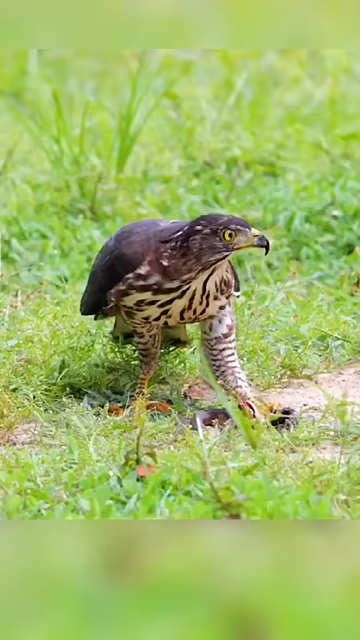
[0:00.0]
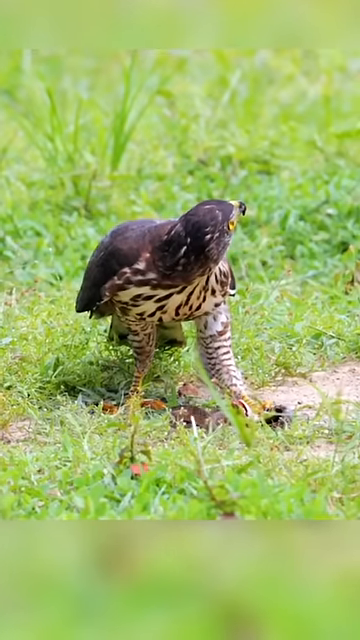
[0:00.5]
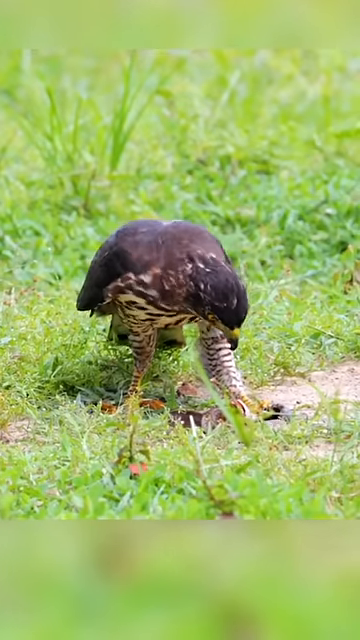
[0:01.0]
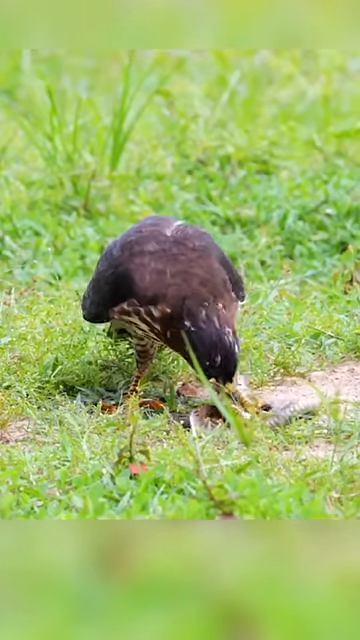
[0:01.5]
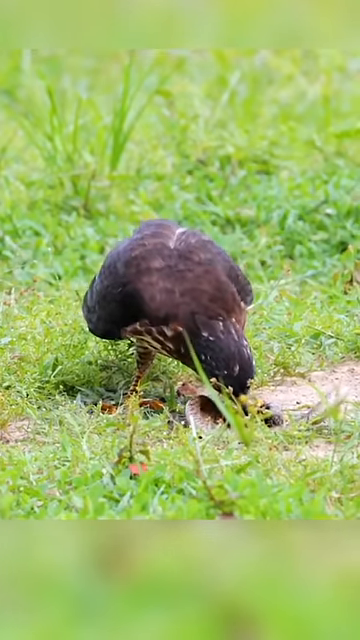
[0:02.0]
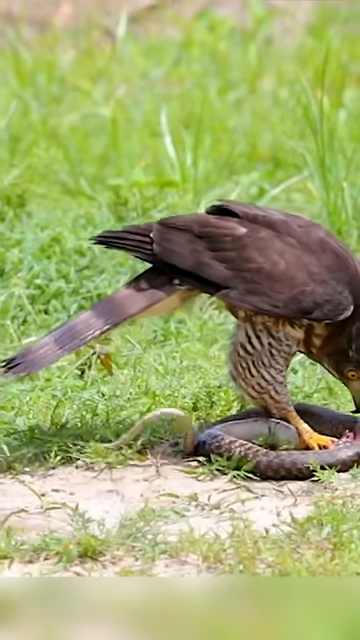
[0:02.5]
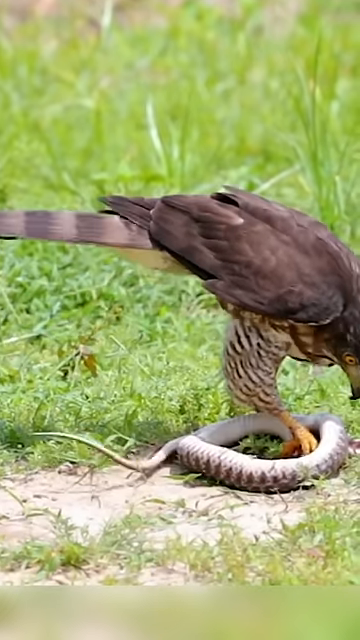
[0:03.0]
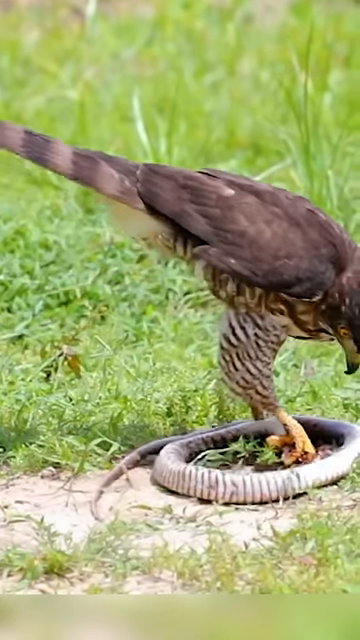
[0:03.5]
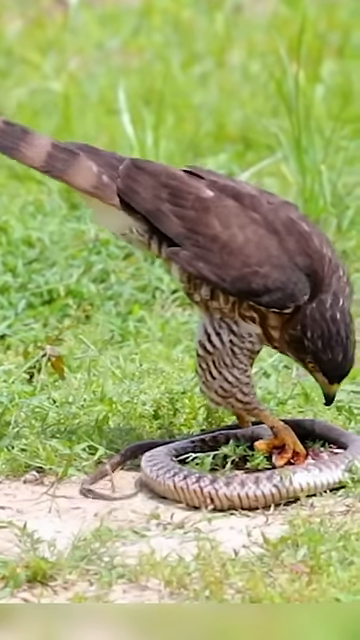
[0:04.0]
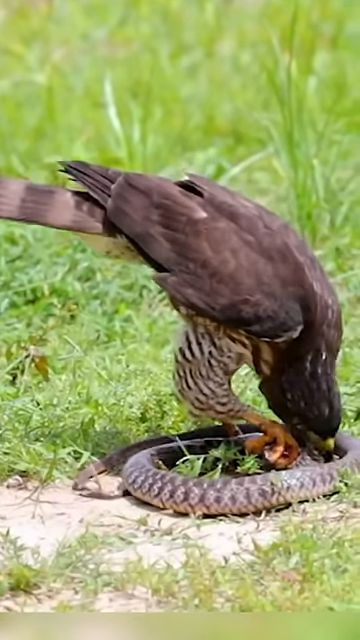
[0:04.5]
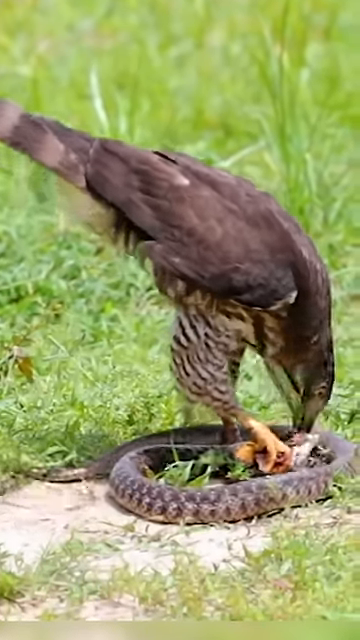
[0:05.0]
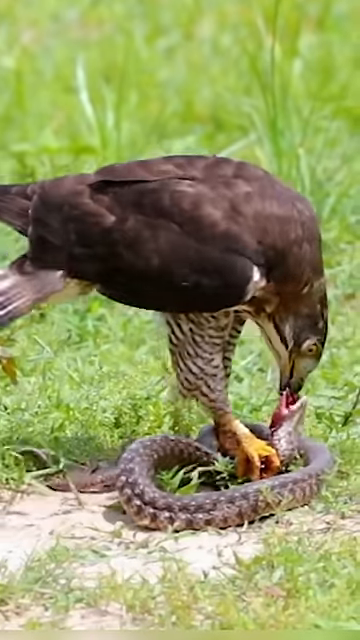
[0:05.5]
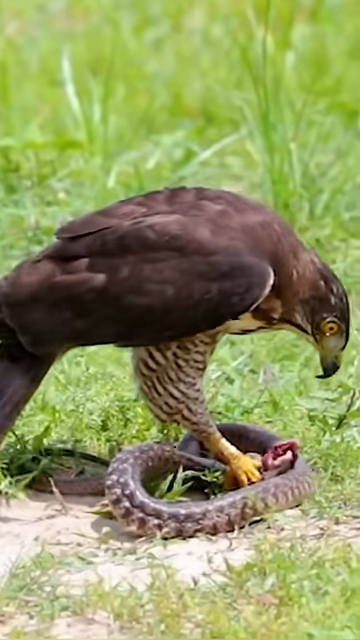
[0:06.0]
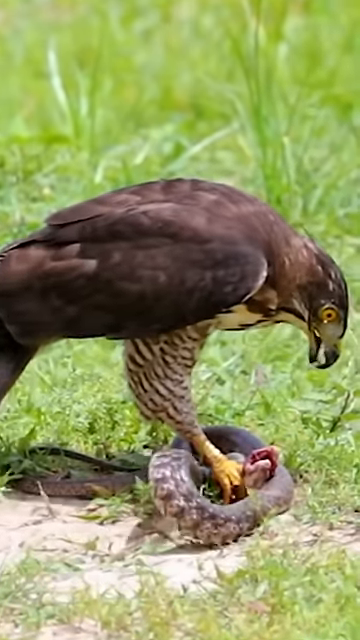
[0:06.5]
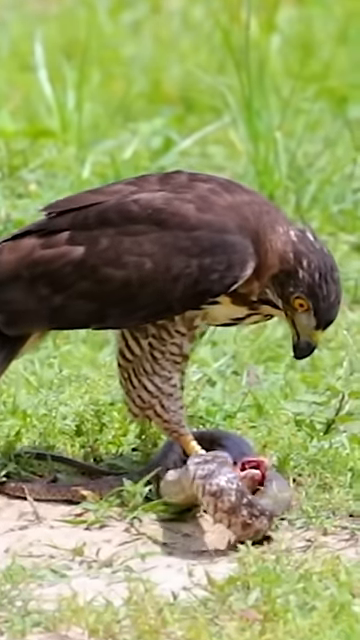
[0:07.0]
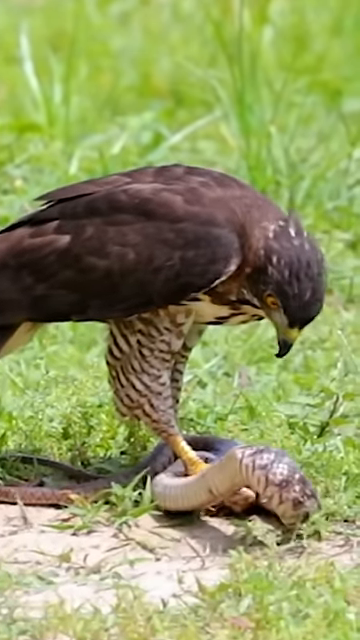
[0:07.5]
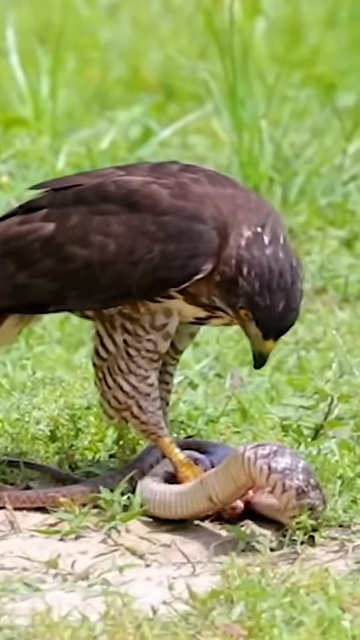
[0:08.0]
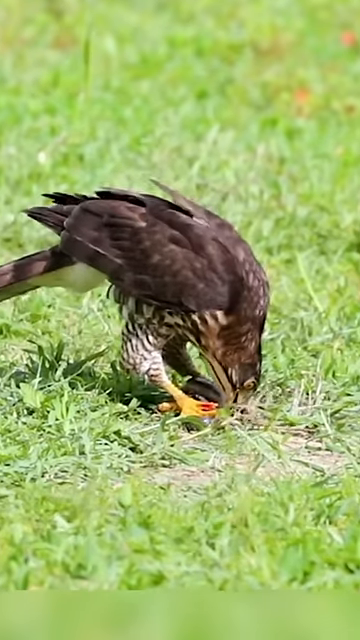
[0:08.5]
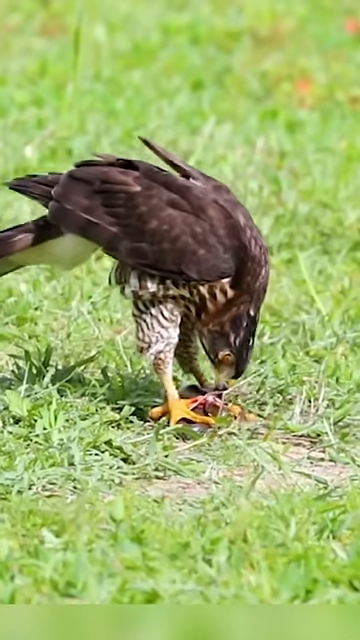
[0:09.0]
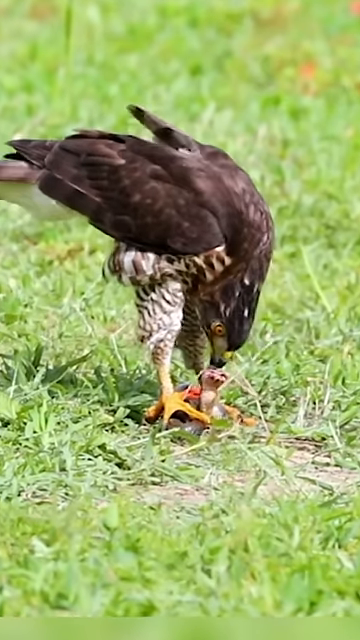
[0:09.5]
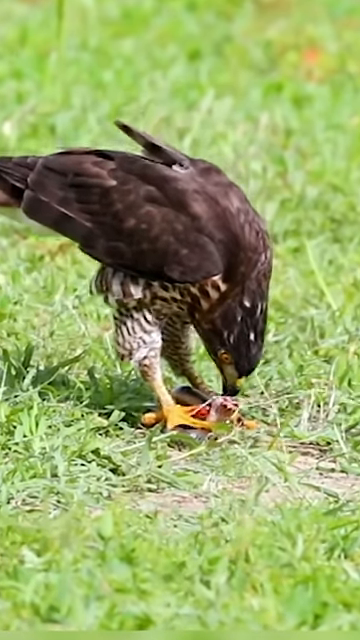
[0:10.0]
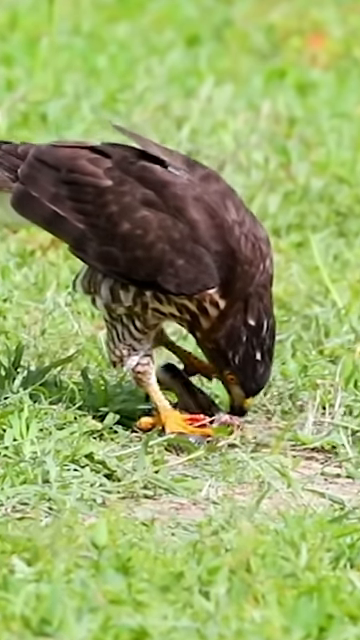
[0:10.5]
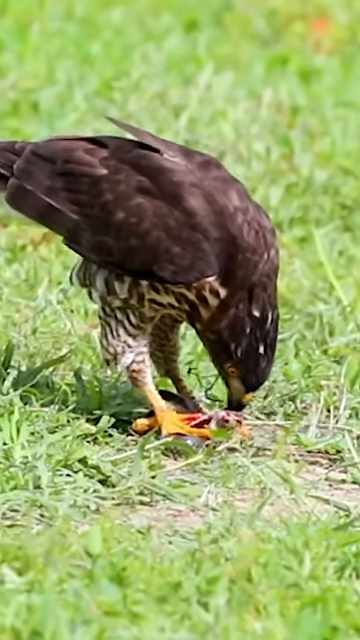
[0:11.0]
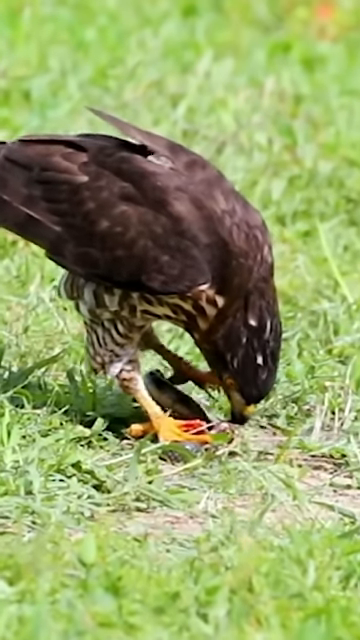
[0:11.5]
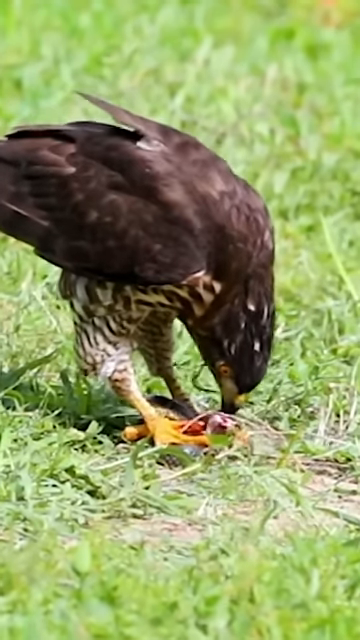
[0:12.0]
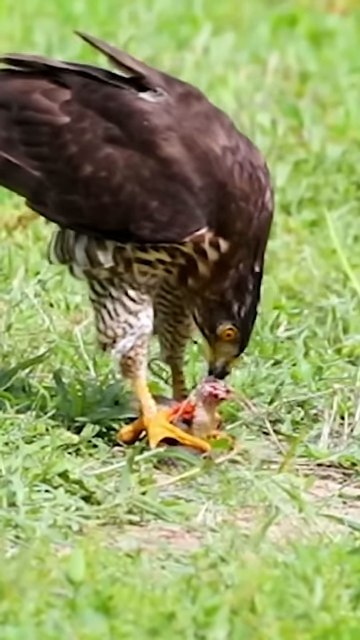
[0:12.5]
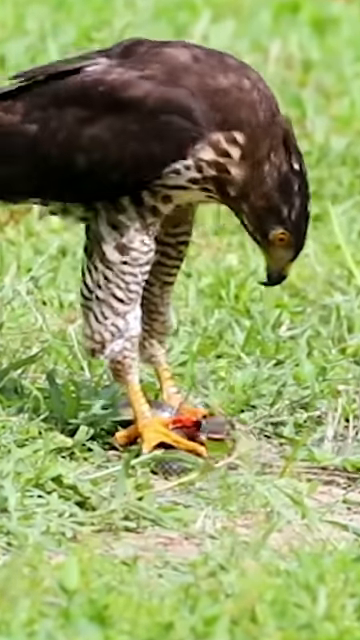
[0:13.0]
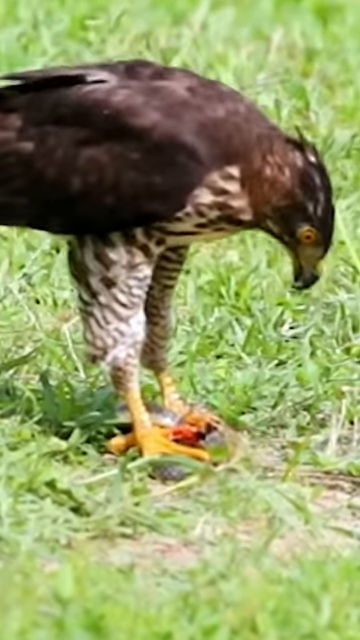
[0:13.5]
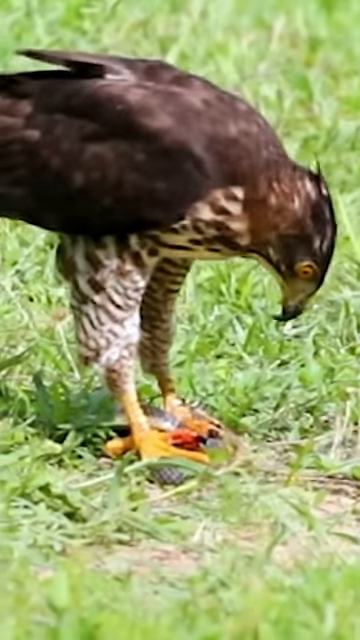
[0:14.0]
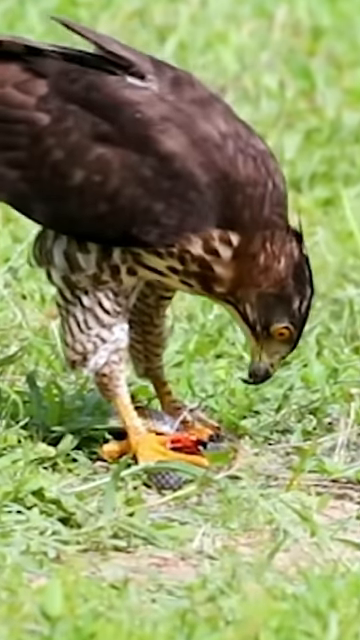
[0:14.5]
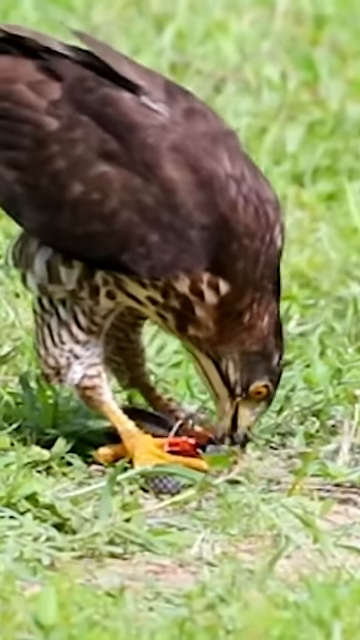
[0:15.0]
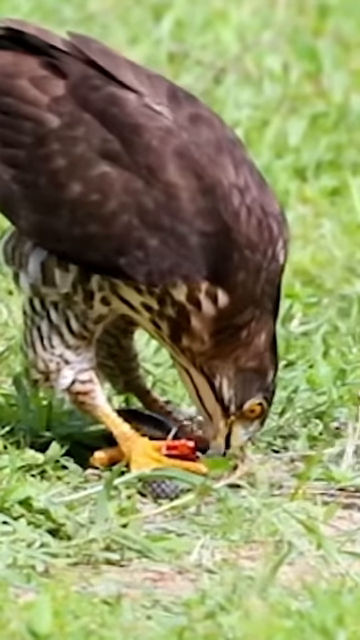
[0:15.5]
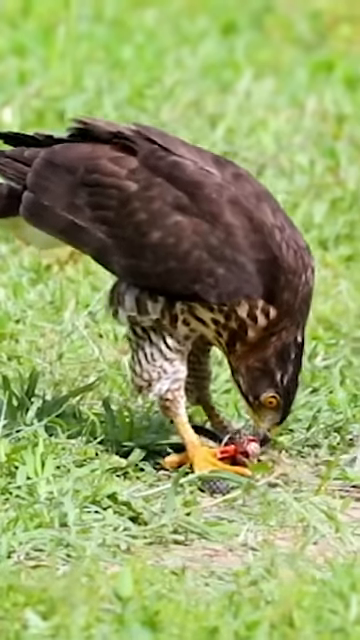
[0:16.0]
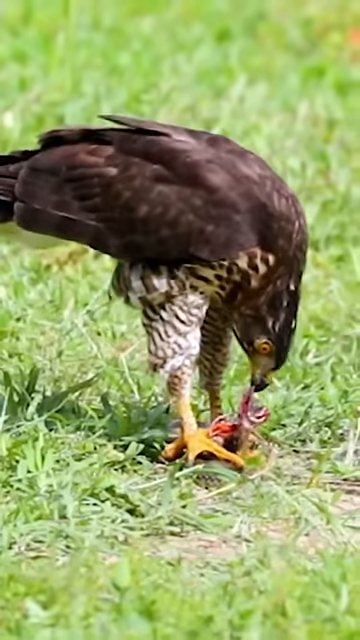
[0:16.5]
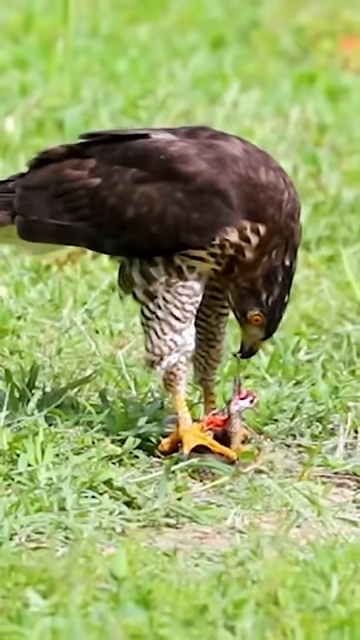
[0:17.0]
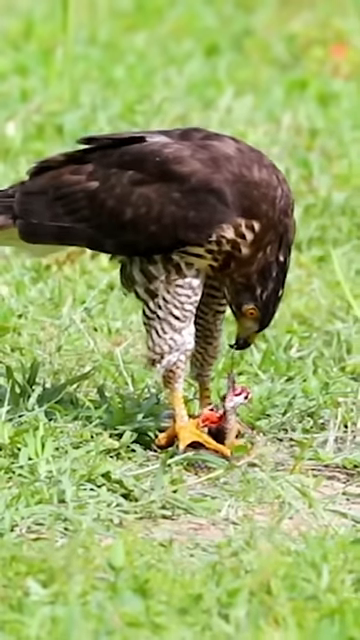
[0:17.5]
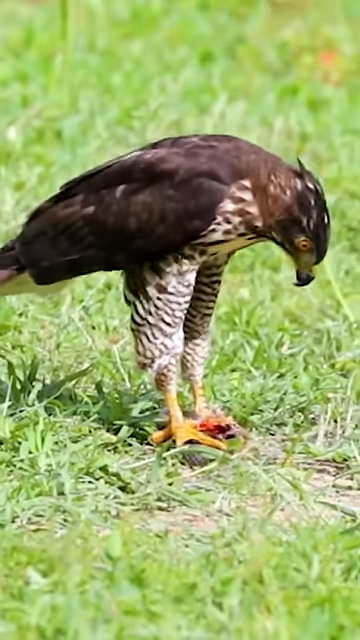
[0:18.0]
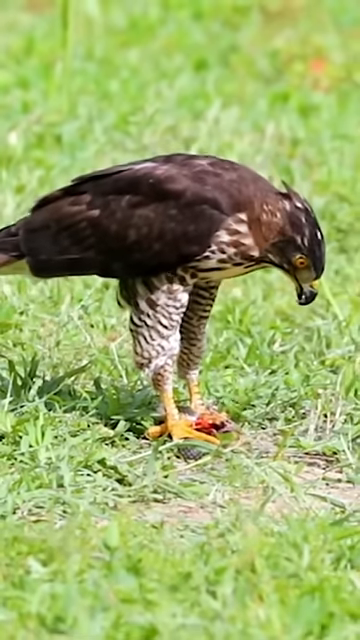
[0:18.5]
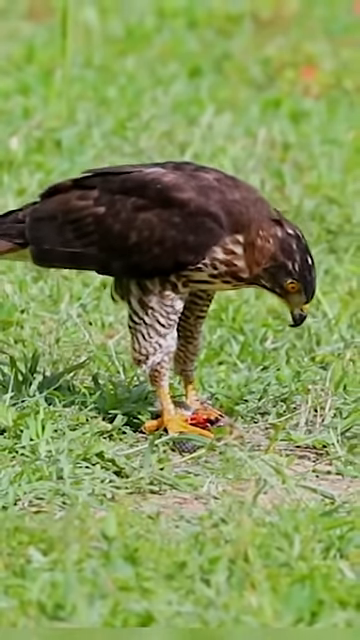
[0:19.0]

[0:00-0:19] This YouTube video, by user MayaHira and titled Eagle vs Big Snake, is a close-up in portrait orientation, likely shot on a cell phone. A large wild eagle stands on ground covered with green grass and dirt, both of its talons pressed firmly down on top of its prey, a large snake of some kind. The eagle bends its head down and tears at the snake with its sharp beak bit by bit, taking bite after bite, coming back up to chew what it has bitten off, and then going back down to take several more bites. The snake rolls around, spinning frantically on the ground as if trying to find a way to get out, but its attempts fail.